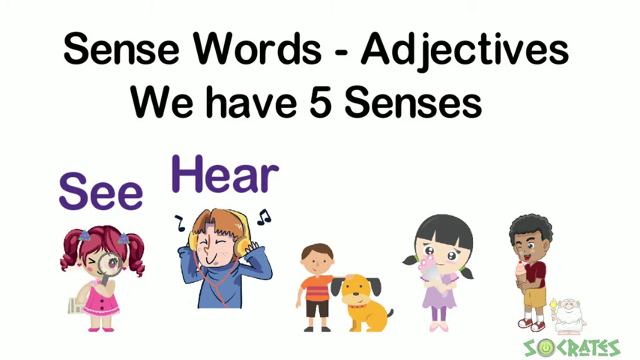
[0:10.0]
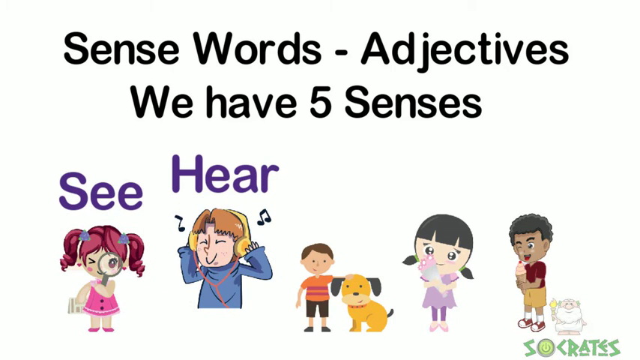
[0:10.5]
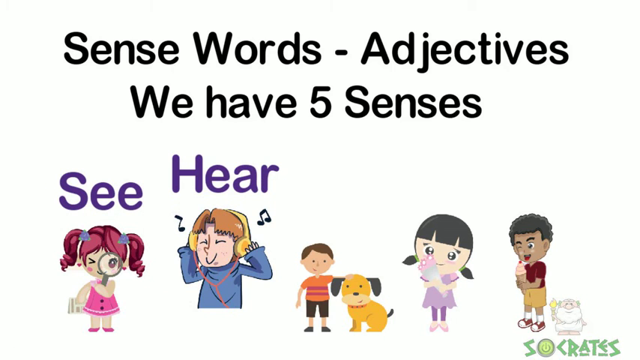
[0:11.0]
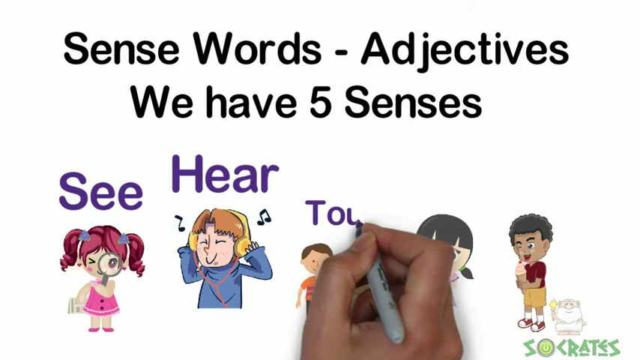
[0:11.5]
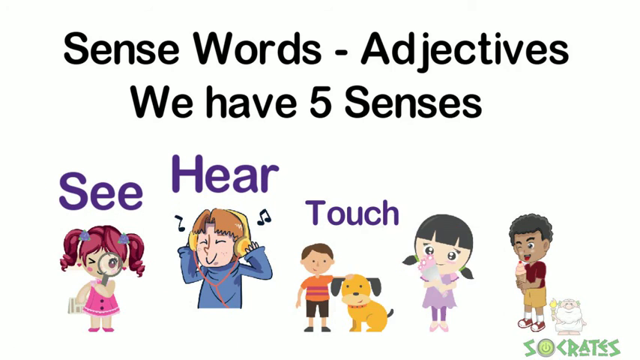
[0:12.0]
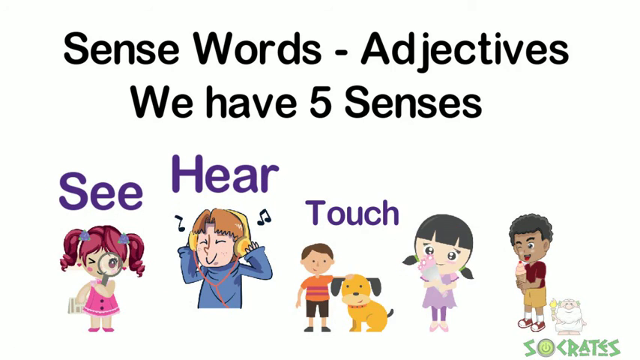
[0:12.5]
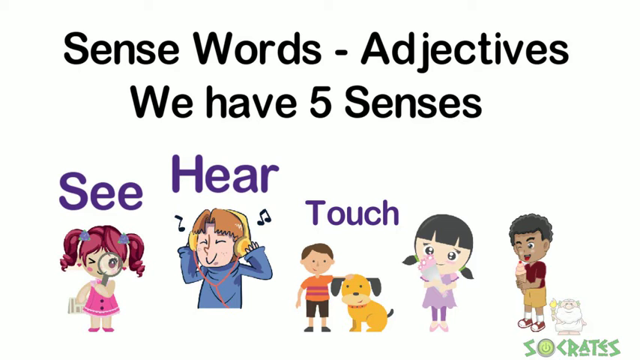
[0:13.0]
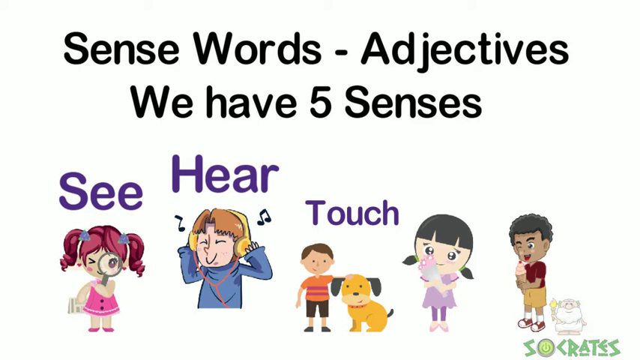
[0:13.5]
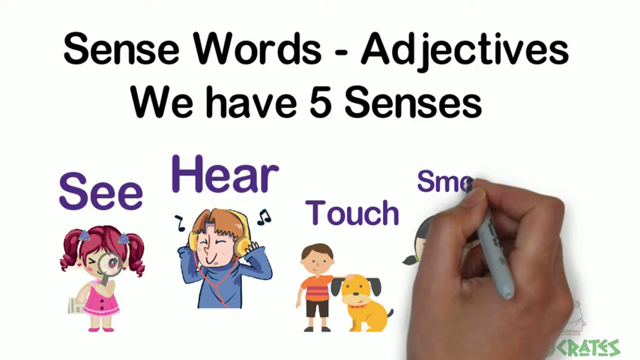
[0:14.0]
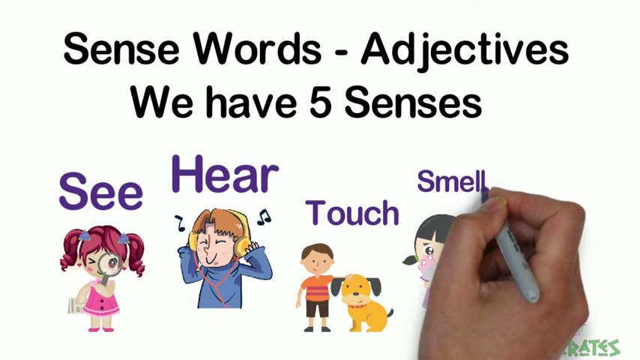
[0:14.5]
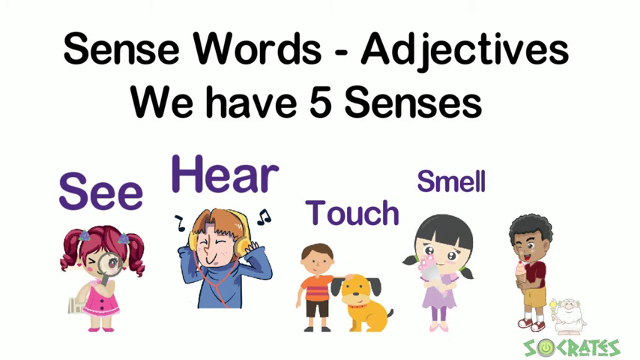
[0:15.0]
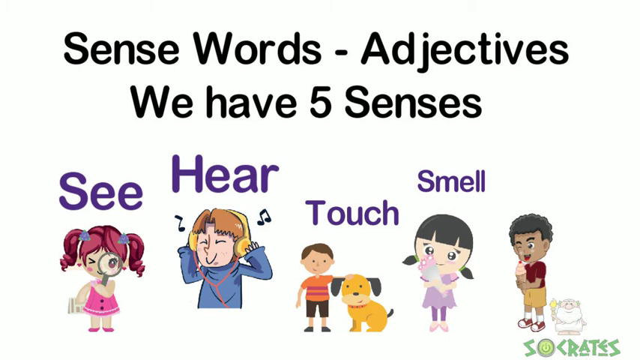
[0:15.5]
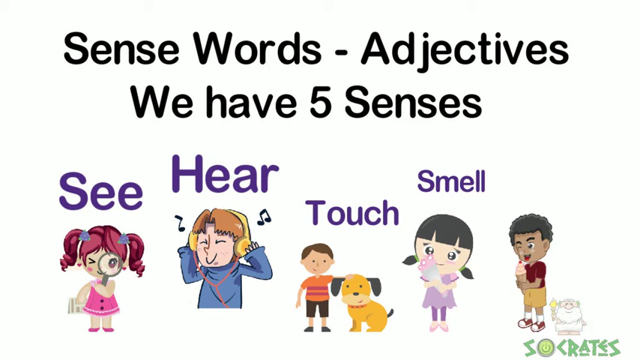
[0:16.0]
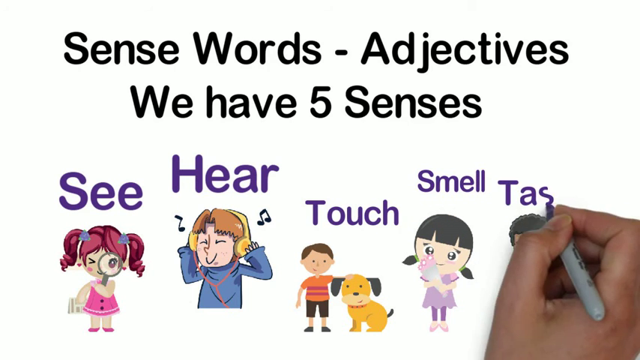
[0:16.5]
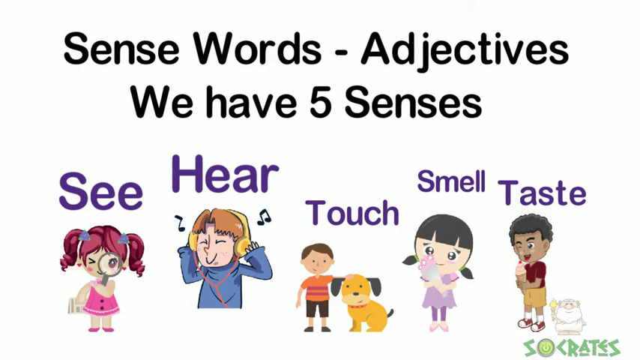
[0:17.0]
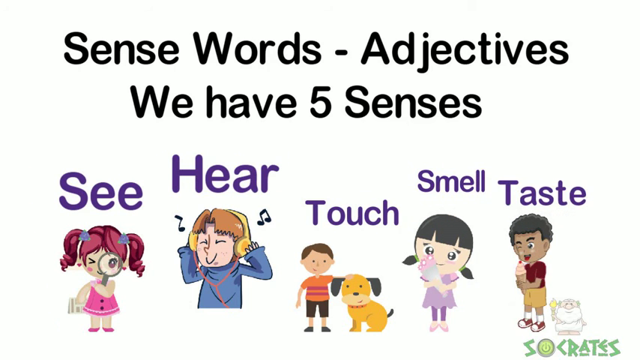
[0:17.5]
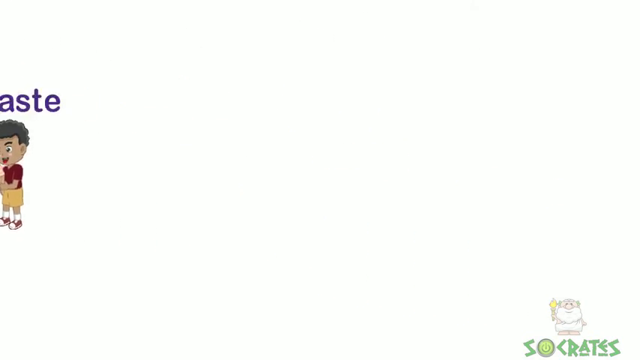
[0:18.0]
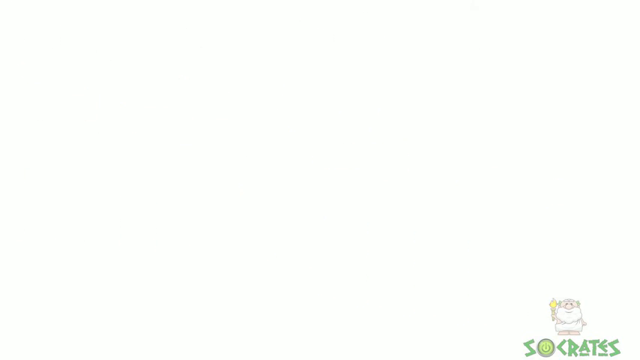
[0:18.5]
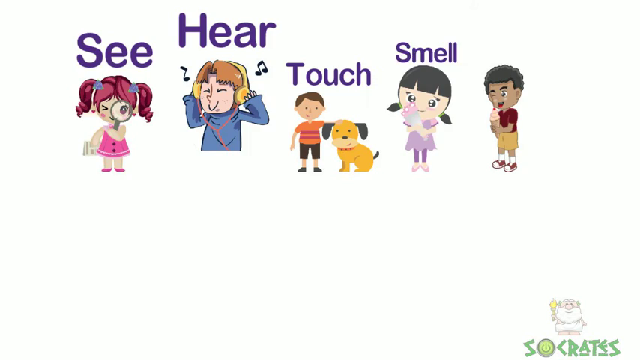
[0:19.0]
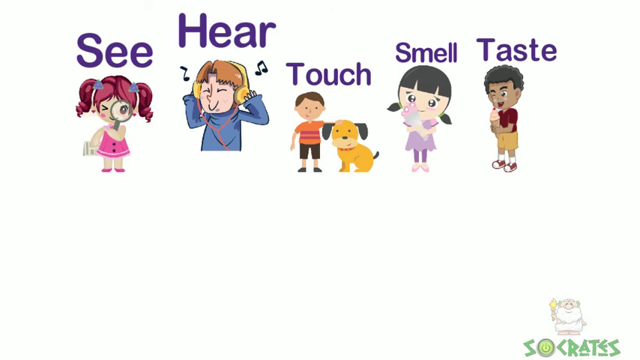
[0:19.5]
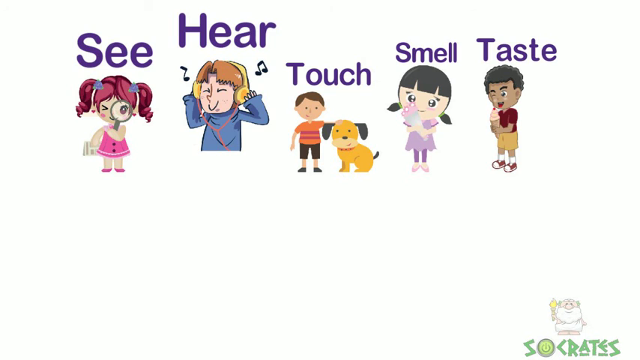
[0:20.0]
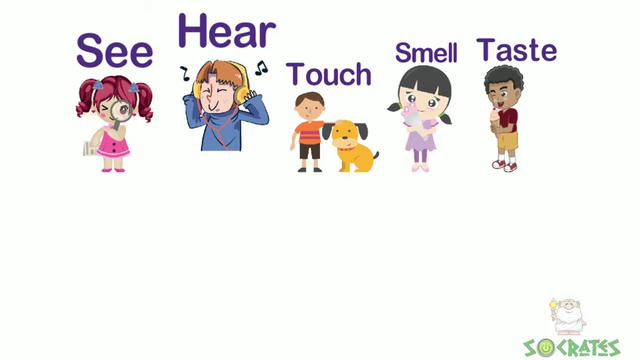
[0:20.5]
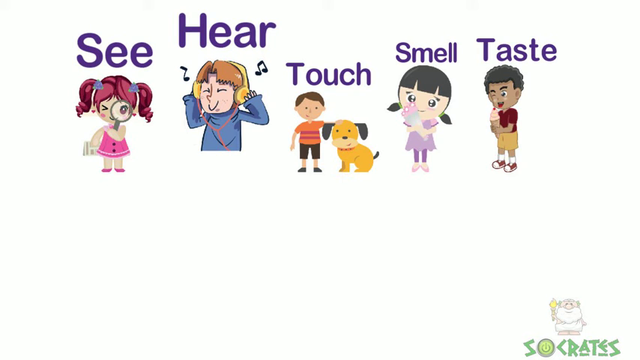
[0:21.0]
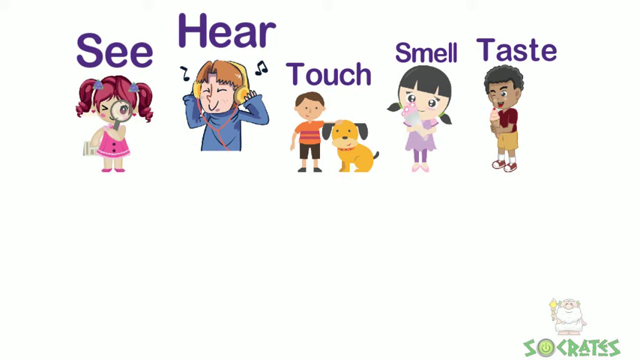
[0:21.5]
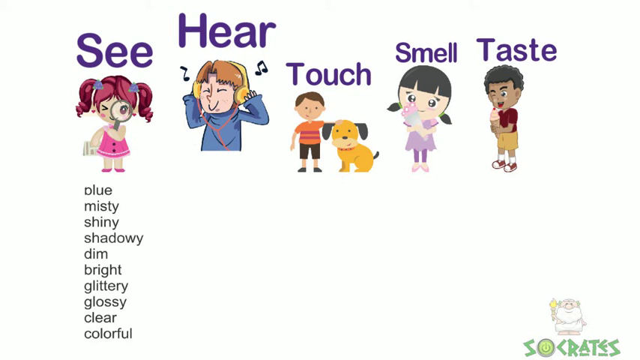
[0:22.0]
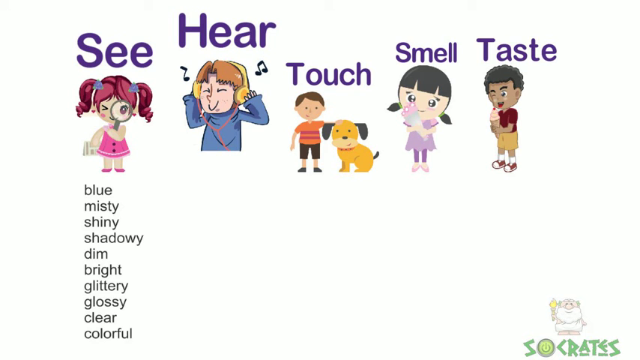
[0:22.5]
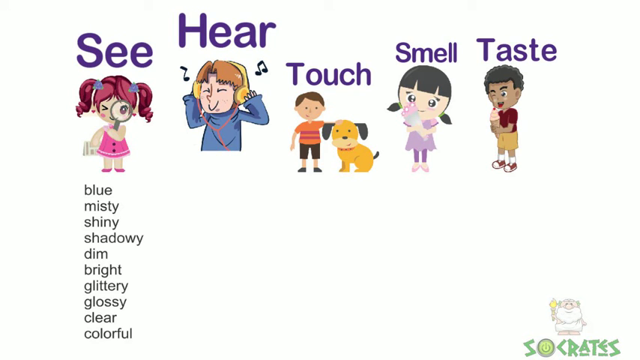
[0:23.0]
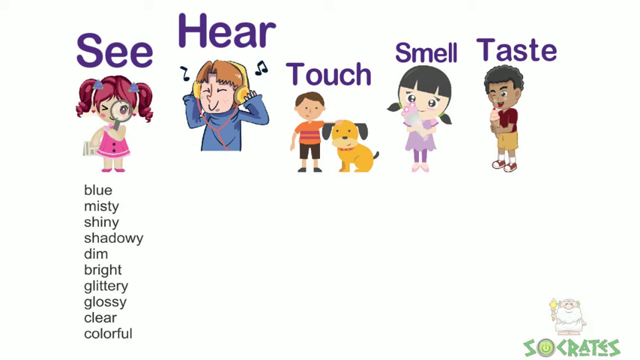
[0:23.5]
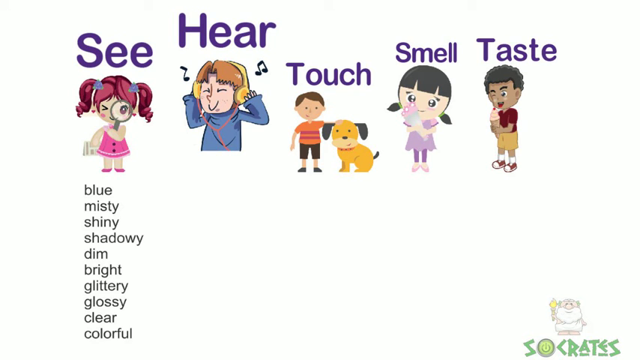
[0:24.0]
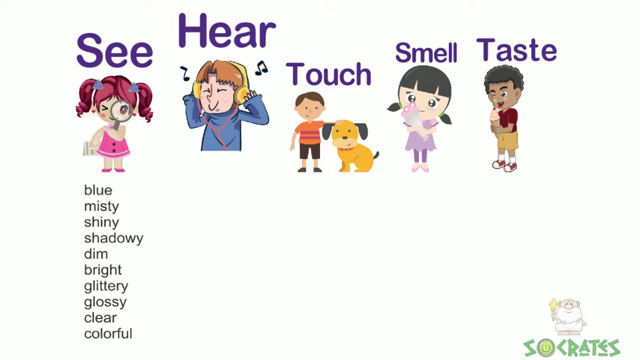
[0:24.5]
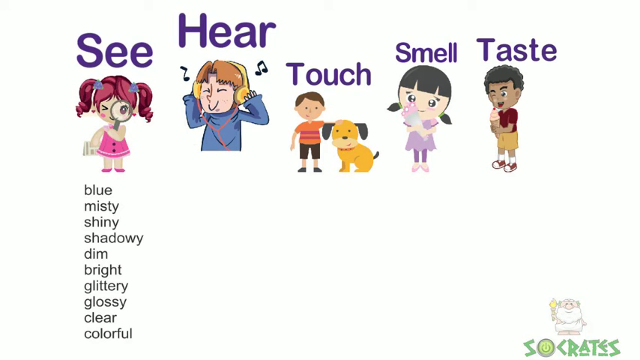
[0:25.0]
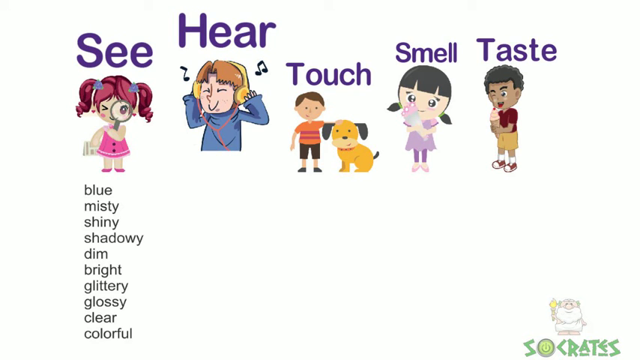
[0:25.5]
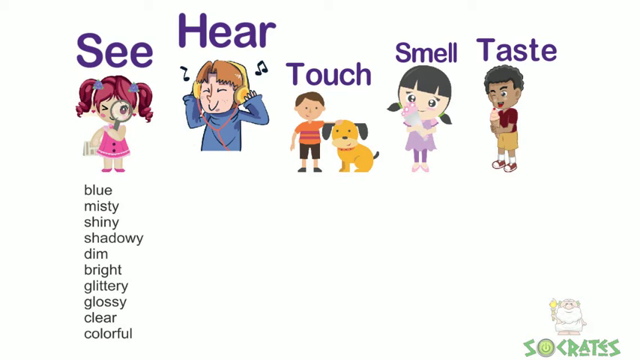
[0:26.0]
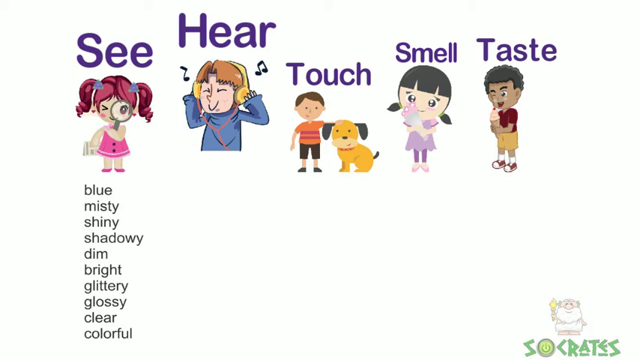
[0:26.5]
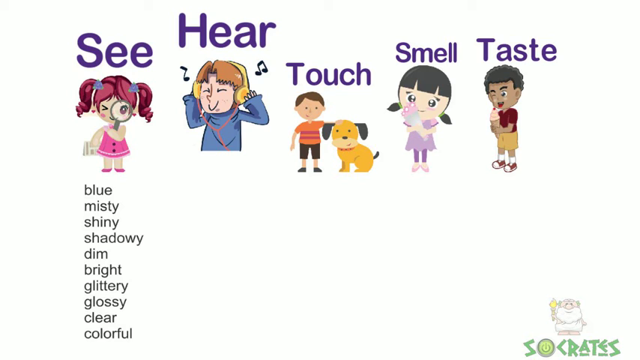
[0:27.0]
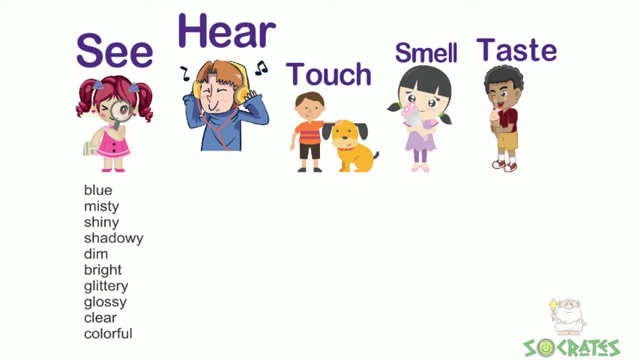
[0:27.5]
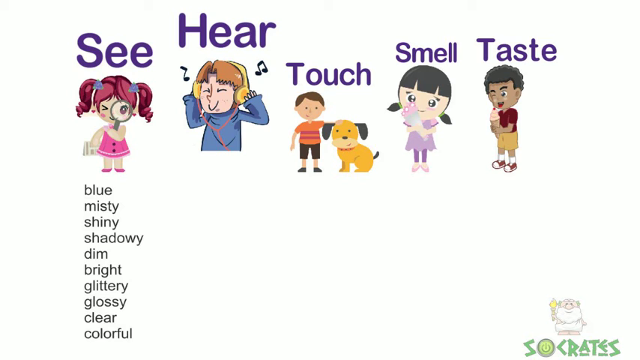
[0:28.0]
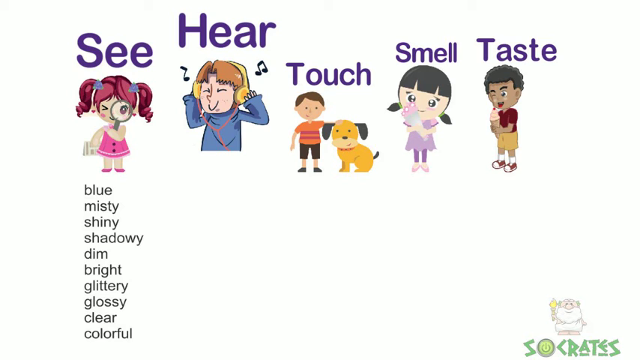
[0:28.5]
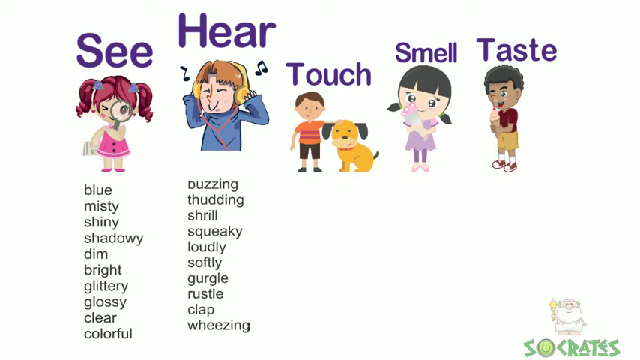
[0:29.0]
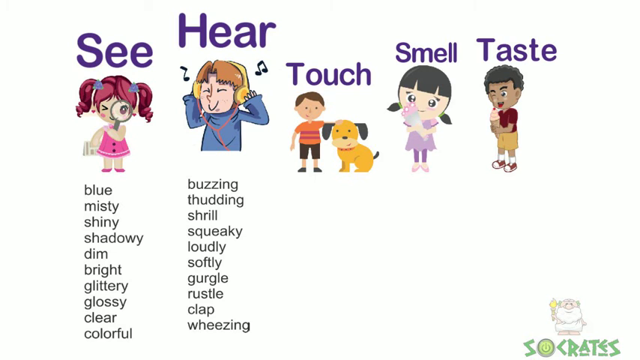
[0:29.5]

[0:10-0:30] The hand continues writing: on the boy with the dog it writes "touch", on the girl with flowers "smell", and on the boy with ice cream "taste". The images then move up and the hand begins listing words. Under the girl on the left it lists words that go with "see": "blue, misty, shiny, shadow, dim, bright, glittery, glossy". The background is still white. It goes on to write, on the boy wearing headphones, the words that go with "hear". In the bottom left corner there is an image with a label below it reading "so crates", written in green.